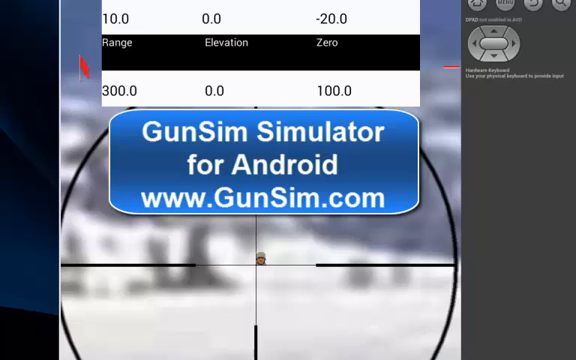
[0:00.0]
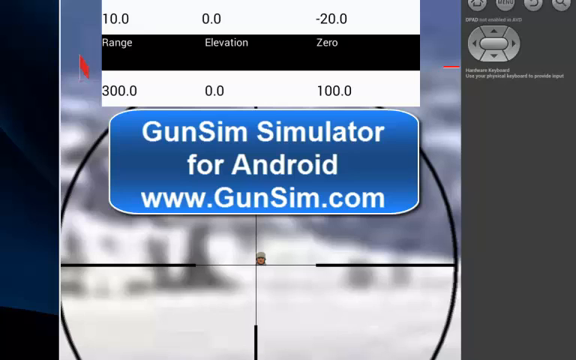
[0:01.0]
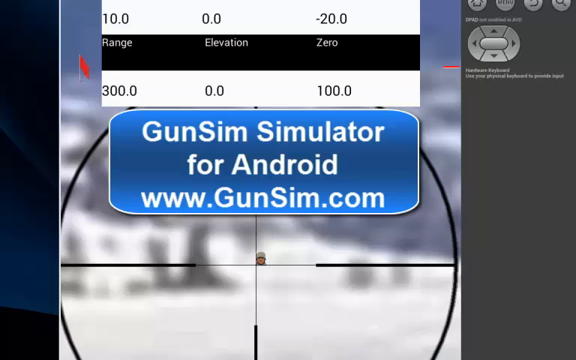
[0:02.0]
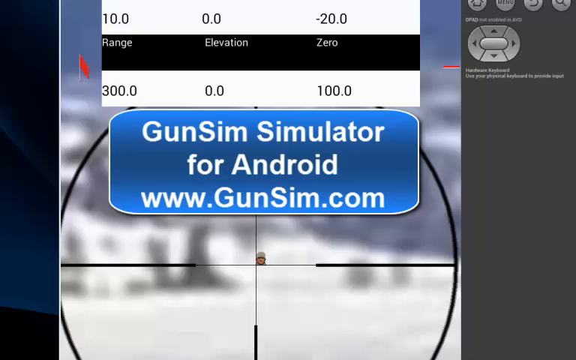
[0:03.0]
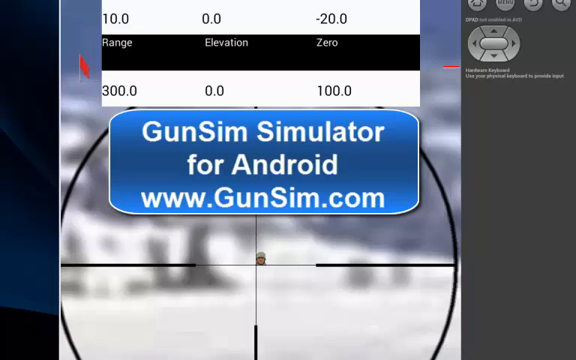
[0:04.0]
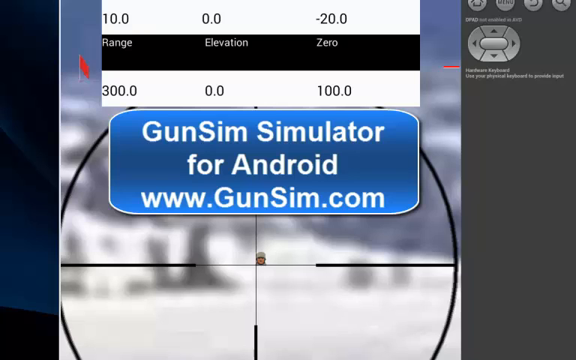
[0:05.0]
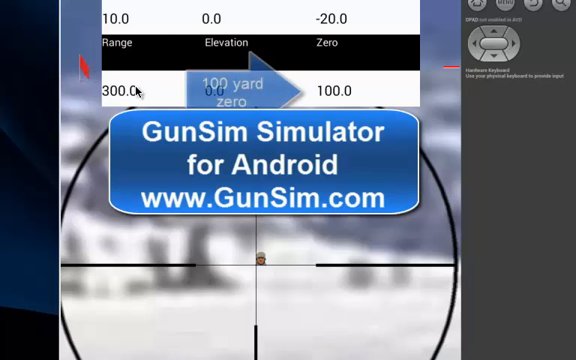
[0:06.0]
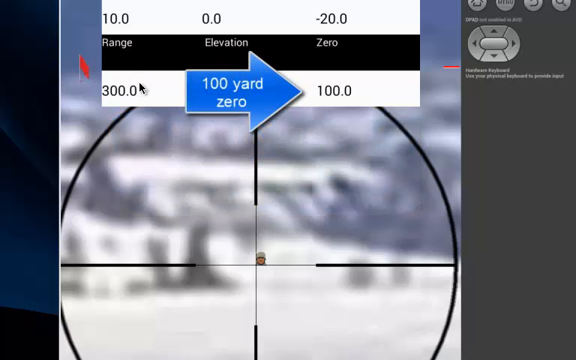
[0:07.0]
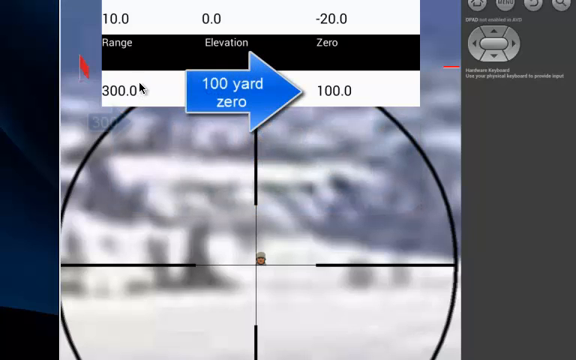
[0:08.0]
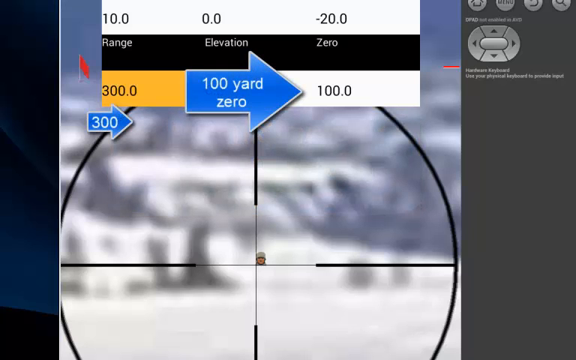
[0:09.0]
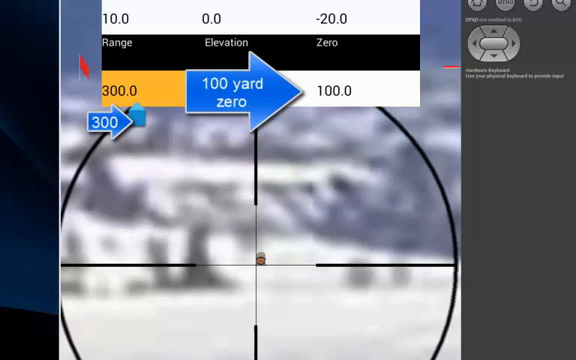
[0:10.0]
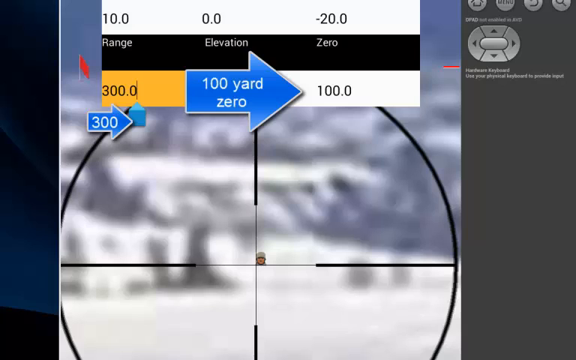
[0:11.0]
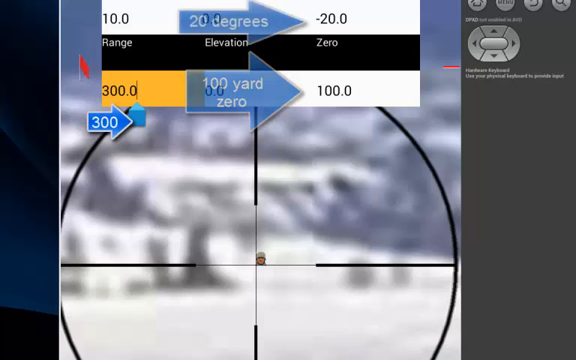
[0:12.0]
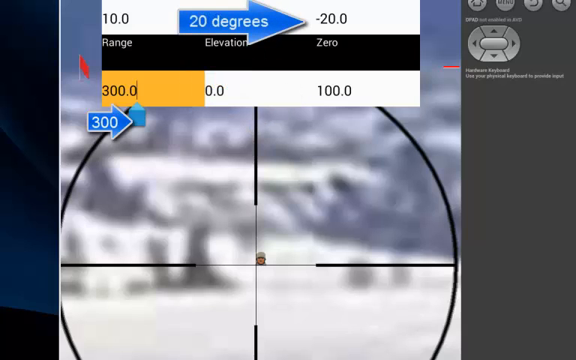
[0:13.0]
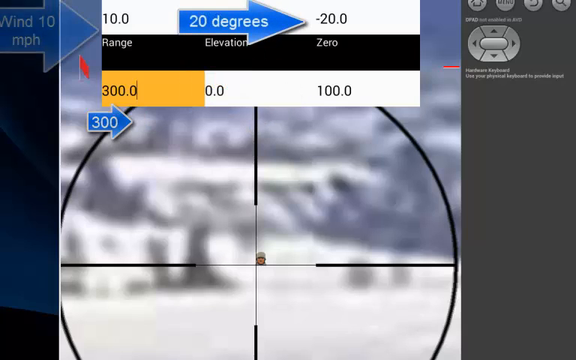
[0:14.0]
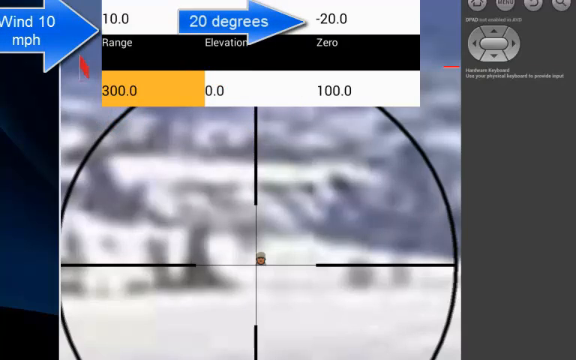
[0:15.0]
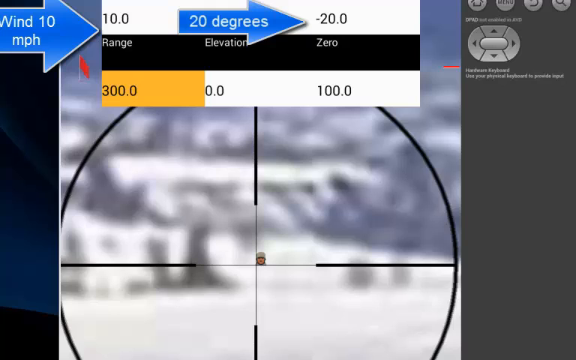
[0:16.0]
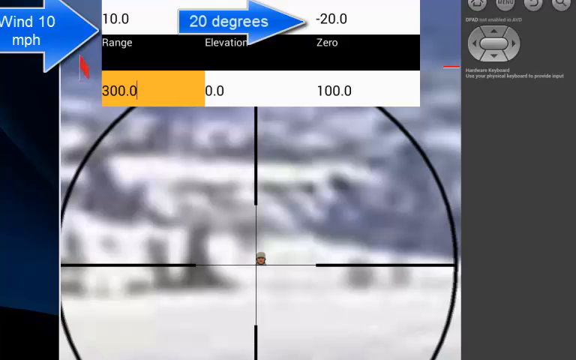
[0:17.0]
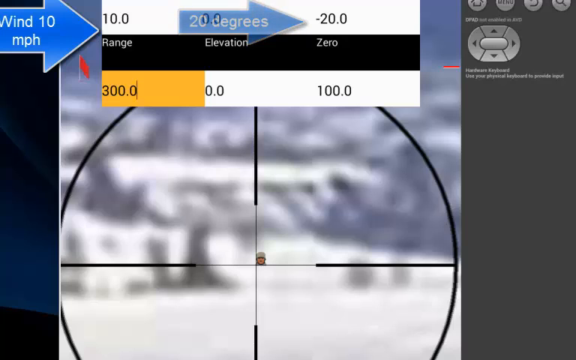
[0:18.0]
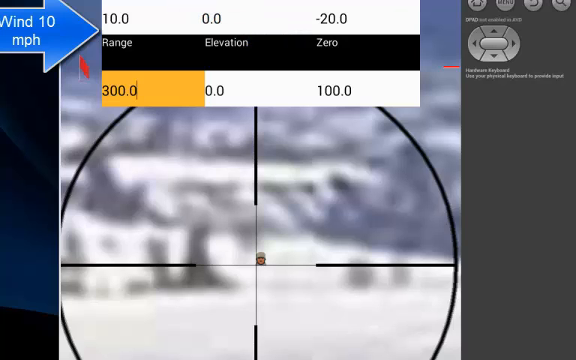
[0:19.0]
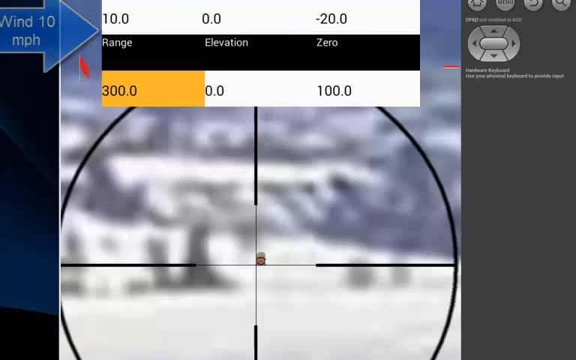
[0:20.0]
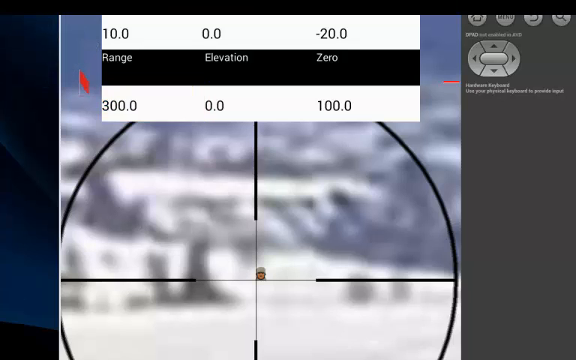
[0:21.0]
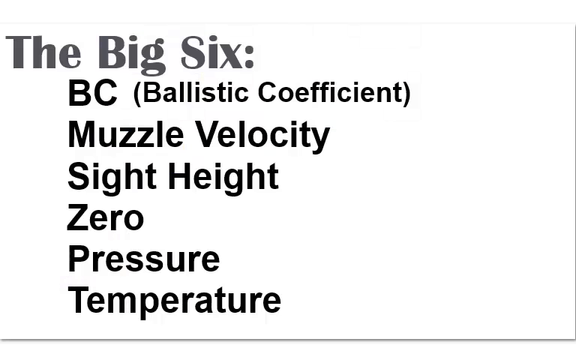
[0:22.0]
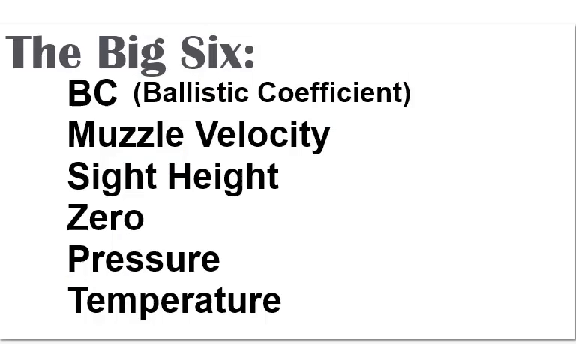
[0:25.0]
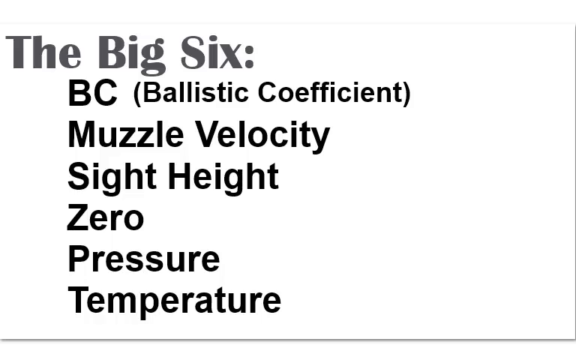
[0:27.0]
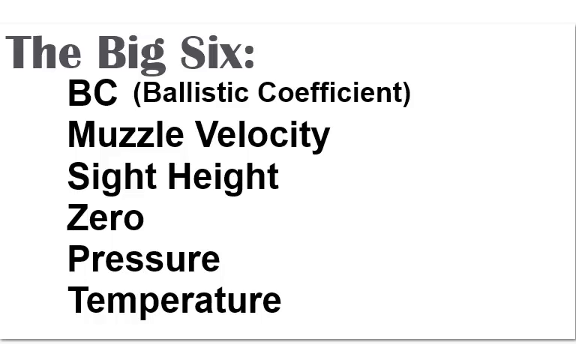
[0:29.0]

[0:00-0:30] The video looks like a game seen from a player's view. A blue rectangular box with a white outline shows white text reading "GunSim", then "Simulator", with "for Android" underneath and "www.gunsim.com" on the next line. Above that are black numbers such as "300.0", and next to it, more toward the middle of the screen, "0.0" and "100.0". Above those, in white, it reads "Range Elevation 0", and above that, in black, "10.0", "0.0" and "-20.0". The view looks like a sniper setting the range before shooting. A black mouse cursor hovers over the 300 and clicks it, and the background of the 300 turns from white to orange. Blue arrows outlined in white appear, one reading "Wind 10 MPH". The screen then turns white, and in dark gray it reads "the Big 6". Underneath, in black, it lists "BC (Ballistic Coefficient)", "Muzzle Velocity", "Sight Height", "0", "Pressure" and "Temperature".